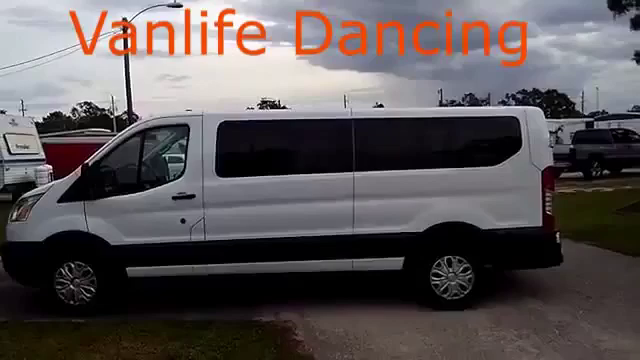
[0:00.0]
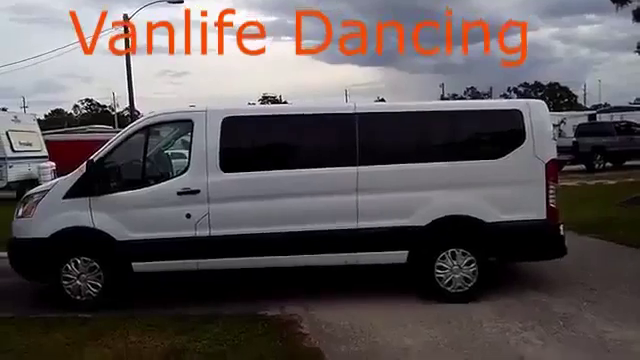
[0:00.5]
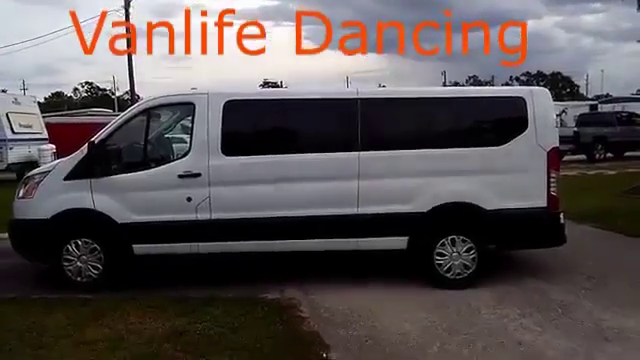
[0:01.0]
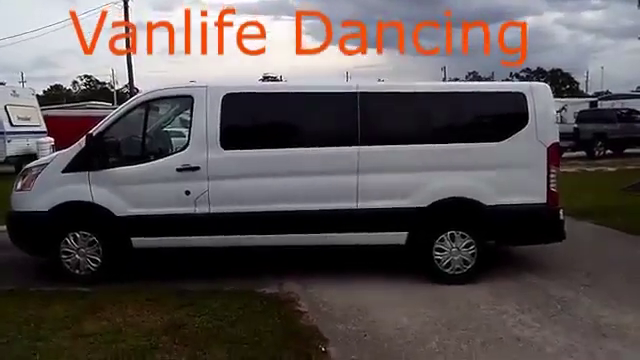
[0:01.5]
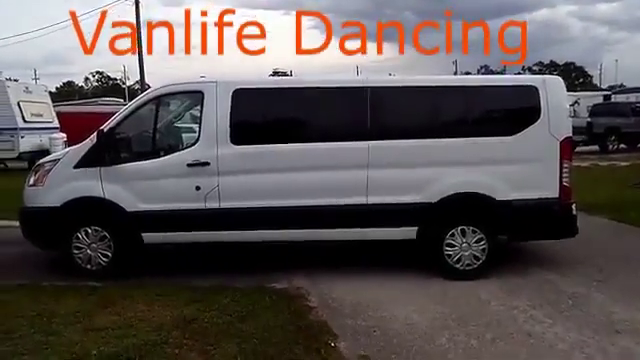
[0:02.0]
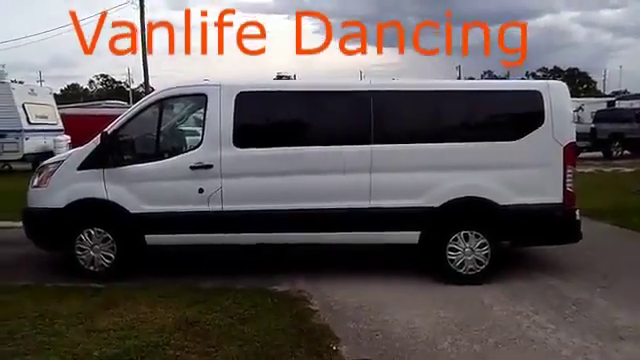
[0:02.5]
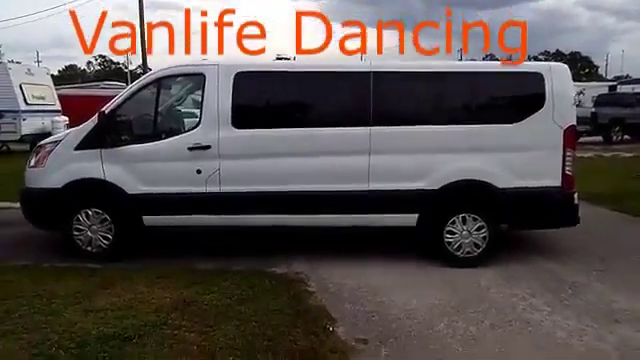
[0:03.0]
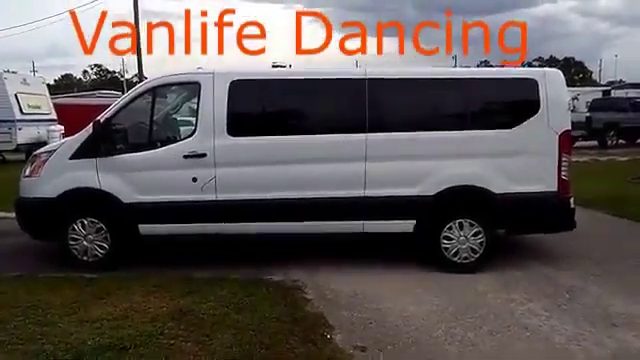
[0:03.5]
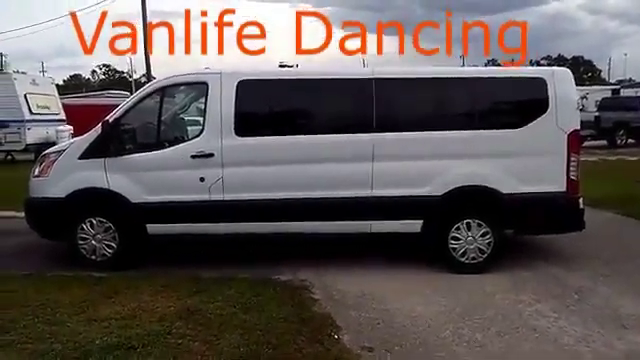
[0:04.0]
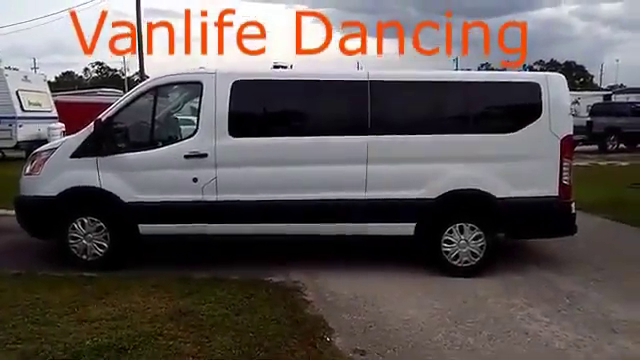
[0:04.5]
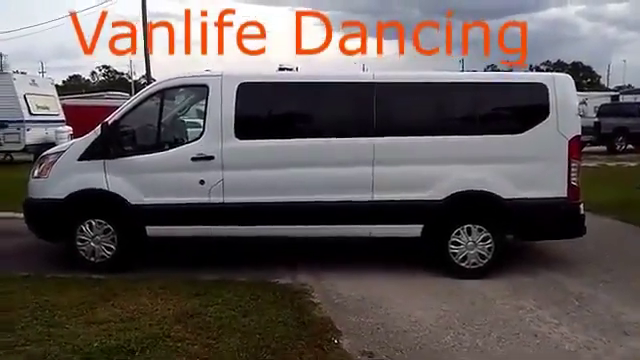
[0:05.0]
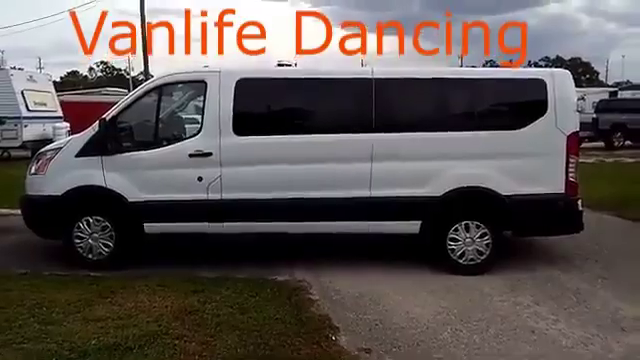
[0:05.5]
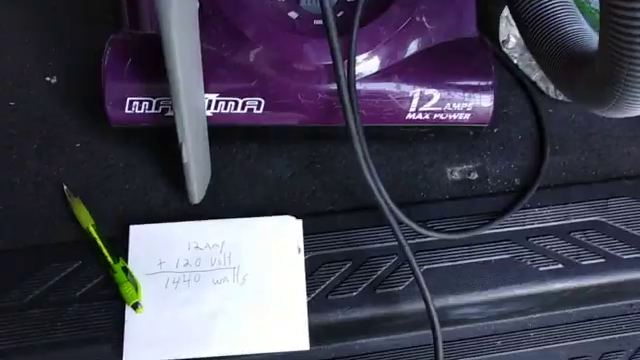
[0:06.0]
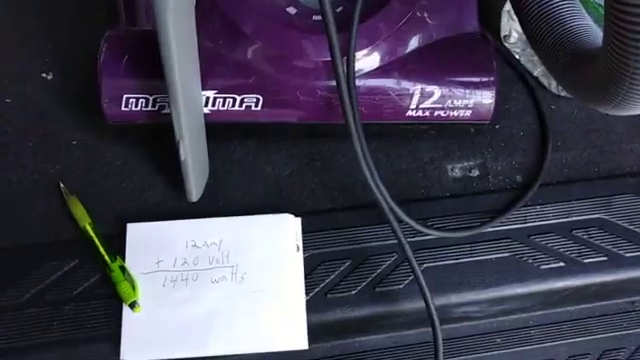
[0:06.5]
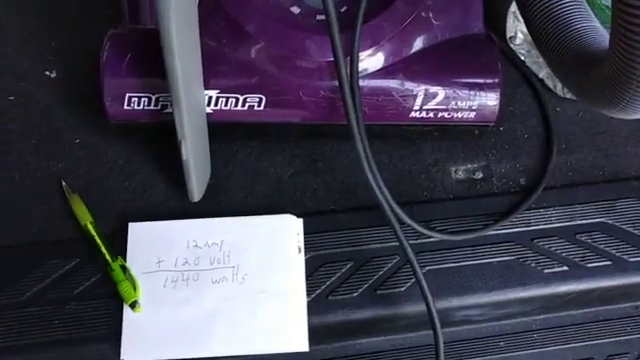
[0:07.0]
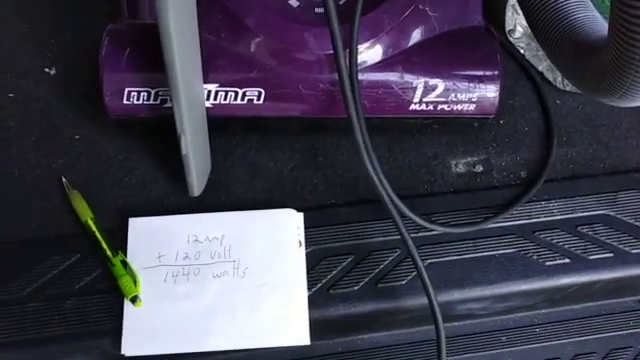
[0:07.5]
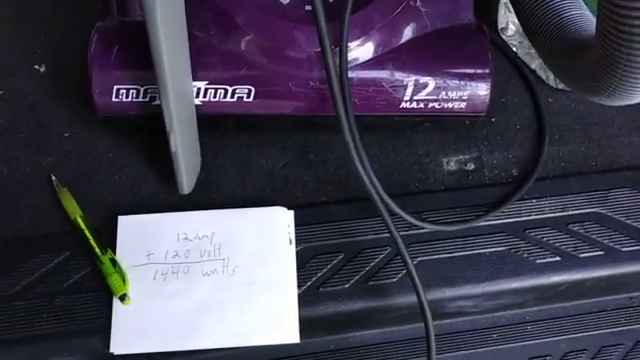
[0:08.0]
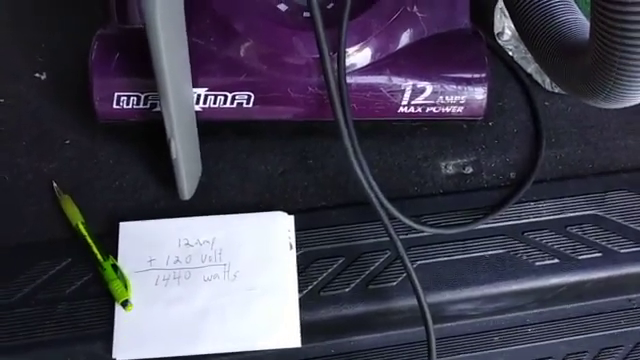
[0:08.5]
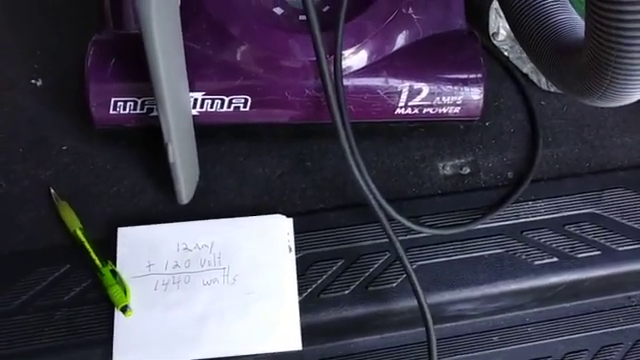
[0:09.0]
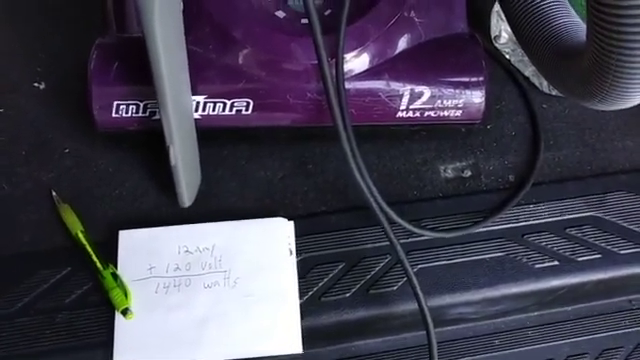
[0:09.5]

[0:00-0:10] A long, all-white van, apparently a 12- or 14-passenger van, is shown. It has two doors on this side: the driver's front door and a second door for getting into the rest of the van. The van appears to be parked in the parking lot of a place that possibly sells vans or RVs. Text in orange at the top reads "life dancing", suggesting the video probably has to do with van life. The view then switches to the floor of the van, apparently the passenger-side floor, where there is a floor mat with a small piece of notepaper with some numbers scribbled on it and a greenish-yellow pen next to it.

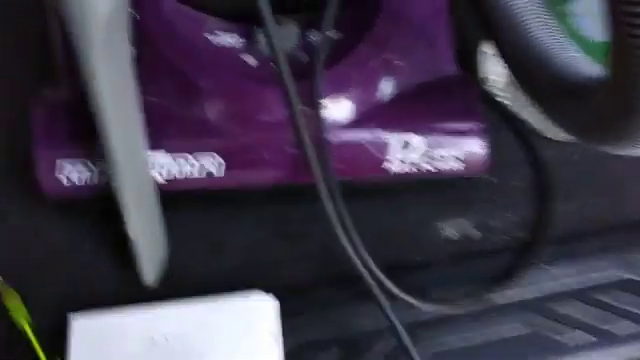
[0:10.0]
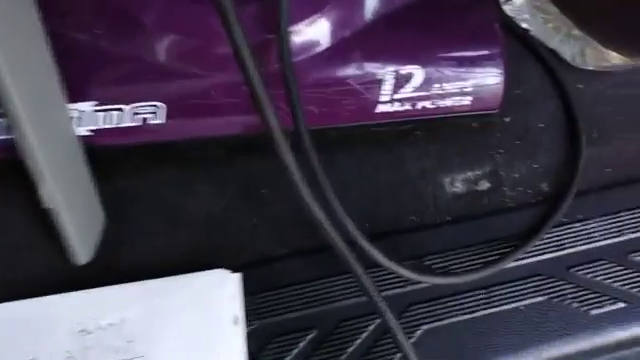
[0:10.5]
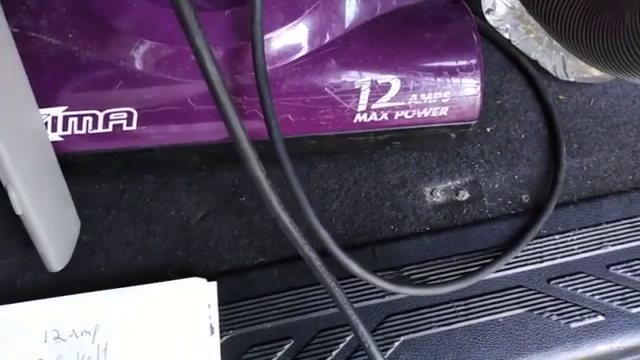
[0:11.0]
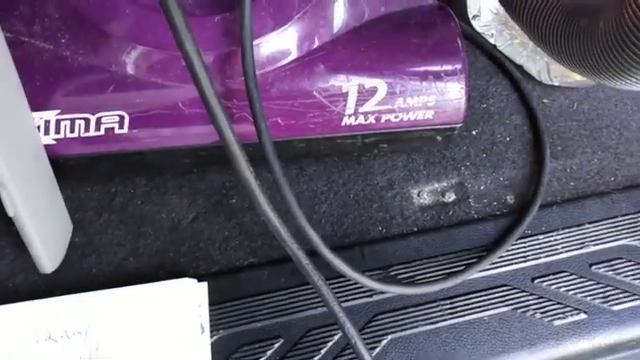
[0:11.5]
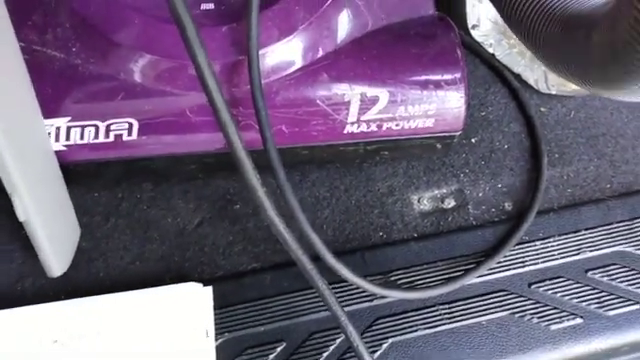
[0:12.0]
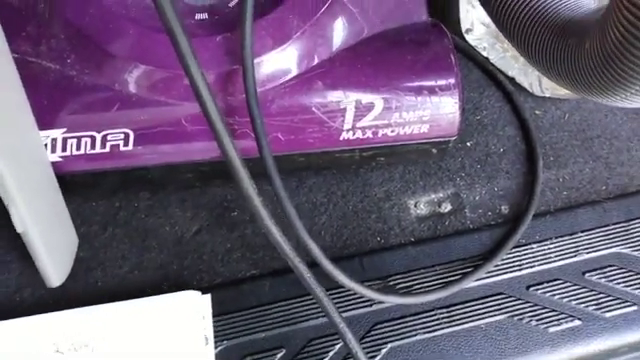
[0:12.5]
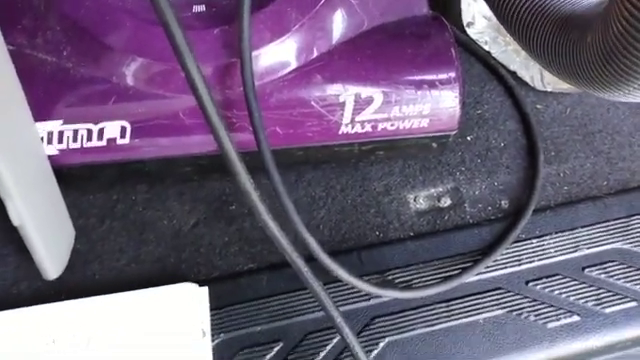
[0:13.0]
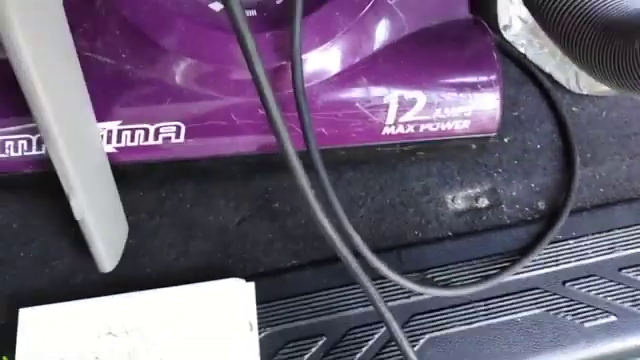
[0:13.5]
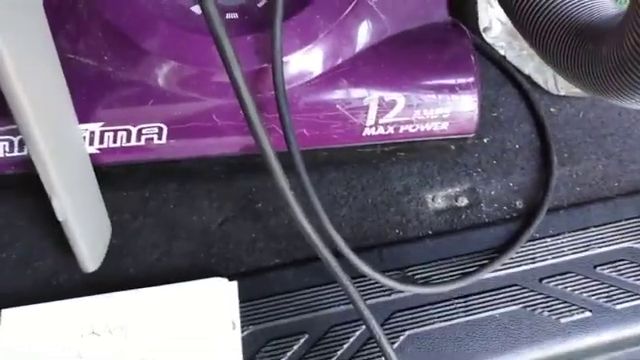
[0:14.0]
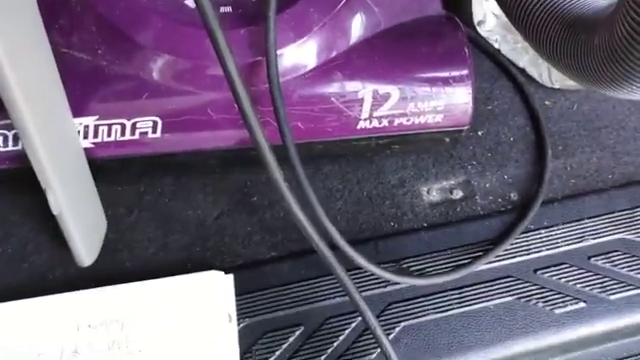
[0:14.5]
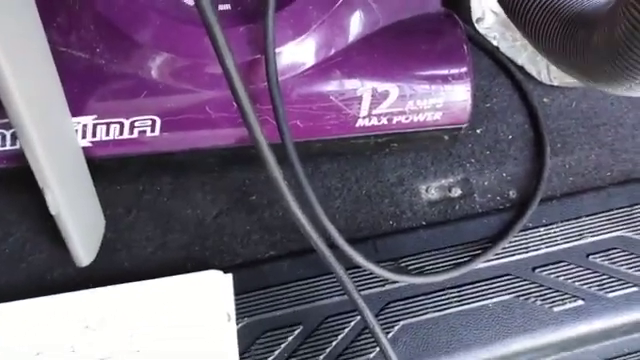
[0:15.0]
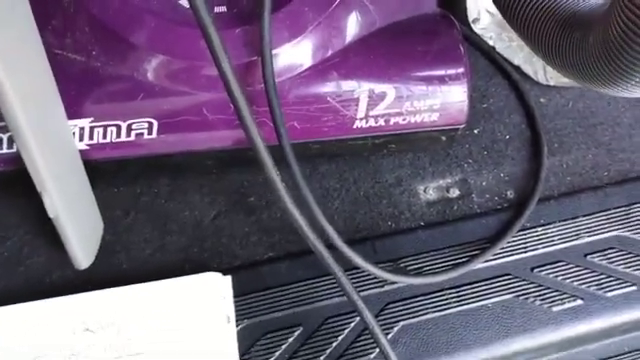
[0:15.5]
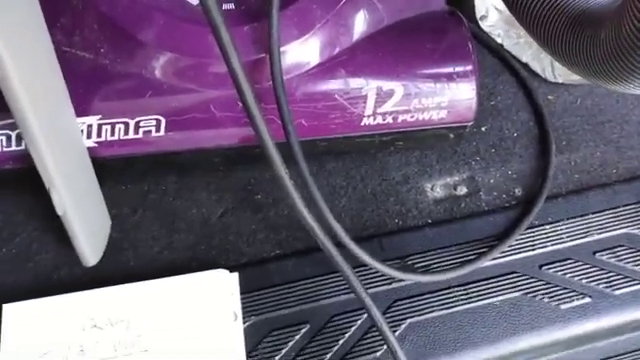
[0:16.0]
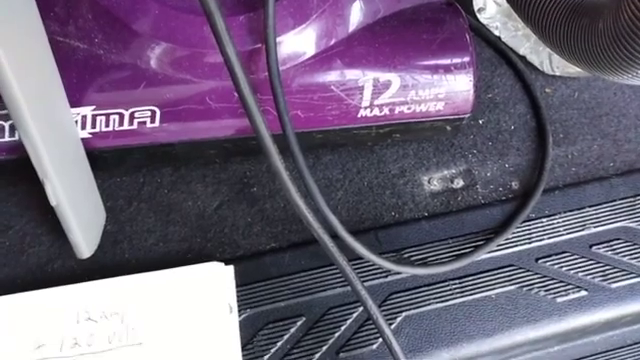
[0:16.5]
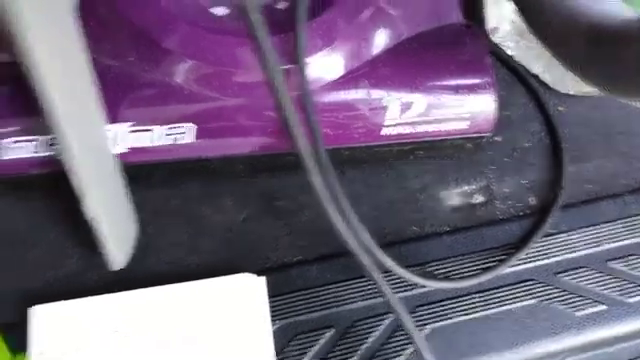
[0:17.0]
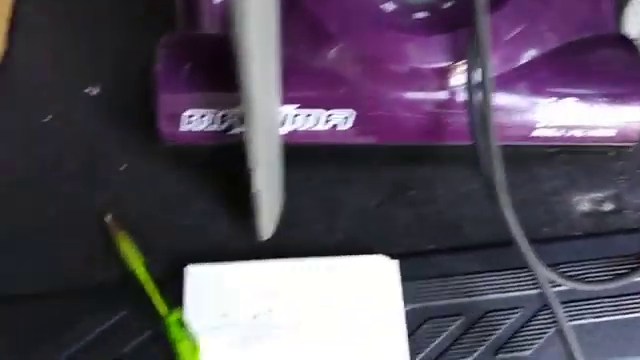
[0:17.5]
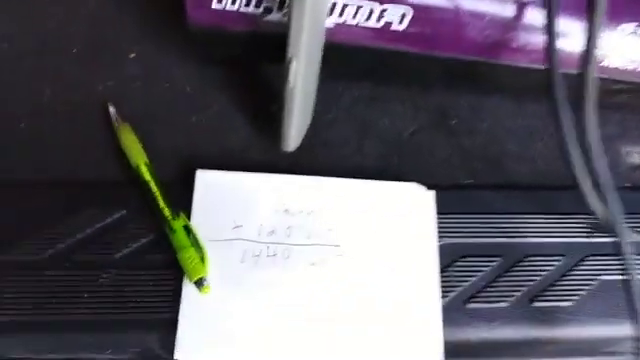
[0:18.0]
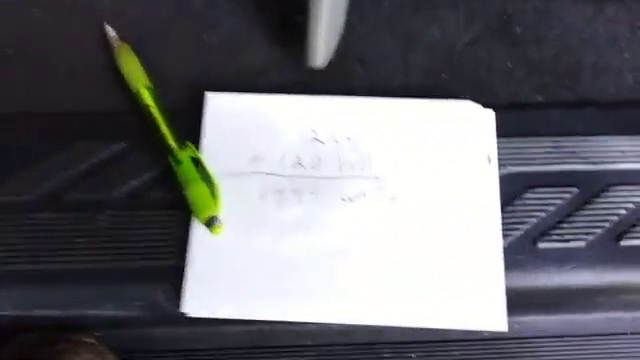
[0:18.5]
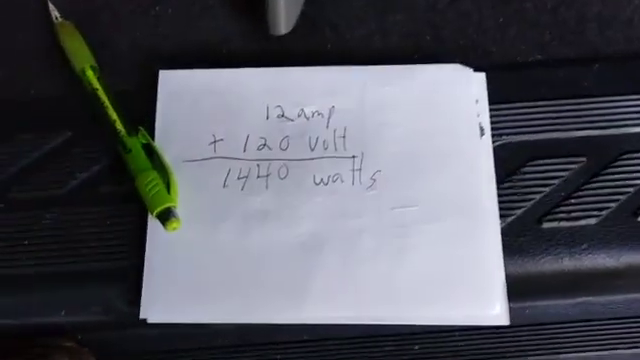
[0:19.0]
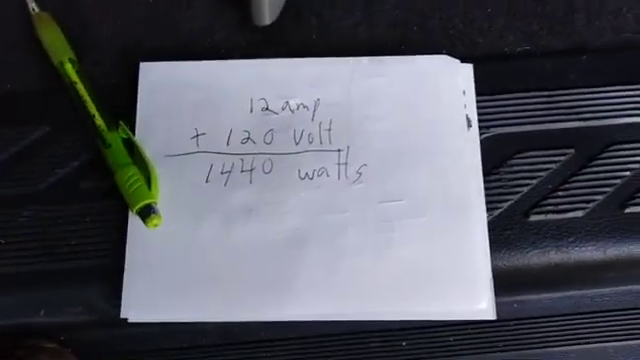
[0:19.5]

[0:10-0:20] The floorboard of the van is shown, apparently at the passenger seat, with a floor mat. A cord is at the bottom, though it is unclear what it connects to. There is also something purple that looks like it may be a floor vacuum, labeled "12 amp max power". The notepad is then shown again, more clearly: it reads "12 amp", below that "+ 120 volt", then a line drawn across like a math equation, and below that "1440 watt". The note is on a plain white piece of paper, not a notebook page. A yellowish neon green click pen, which could possibly be a pencil, has part of it touching the floor and part touching the white paper.